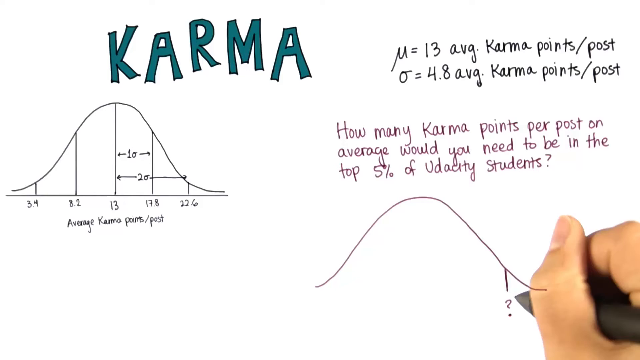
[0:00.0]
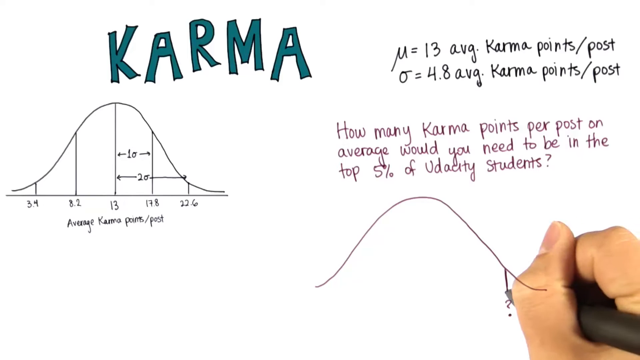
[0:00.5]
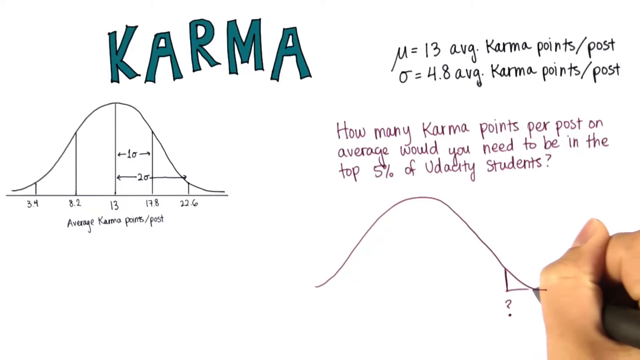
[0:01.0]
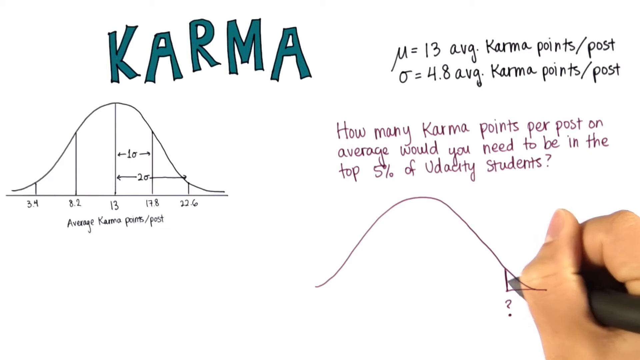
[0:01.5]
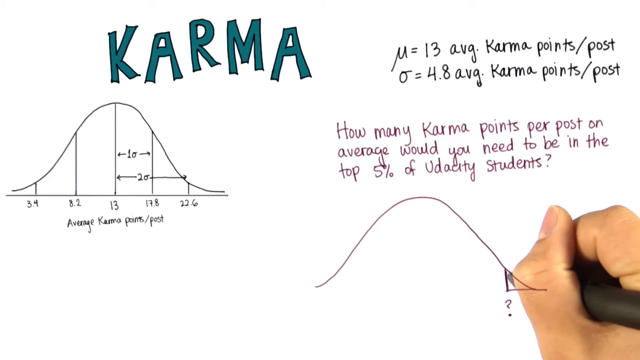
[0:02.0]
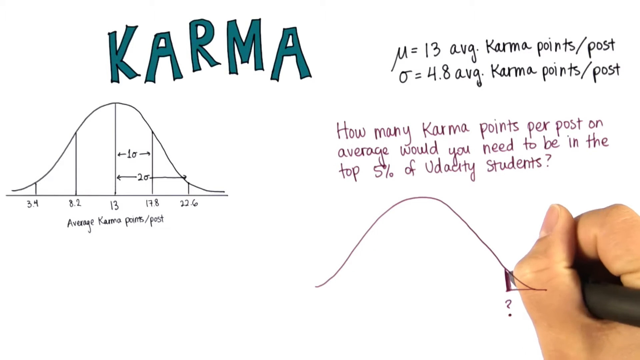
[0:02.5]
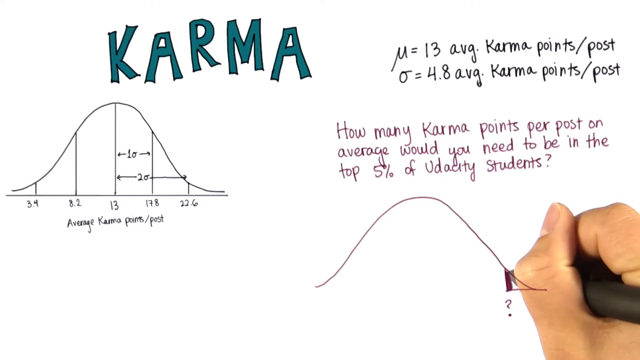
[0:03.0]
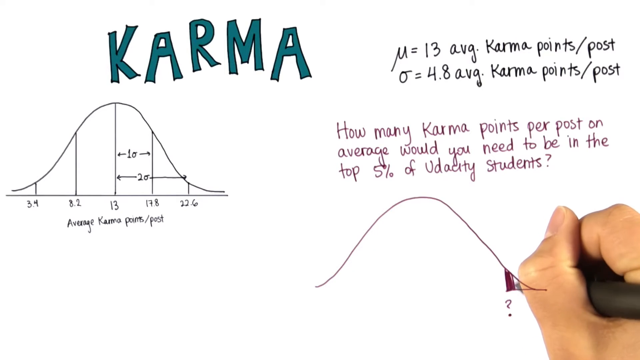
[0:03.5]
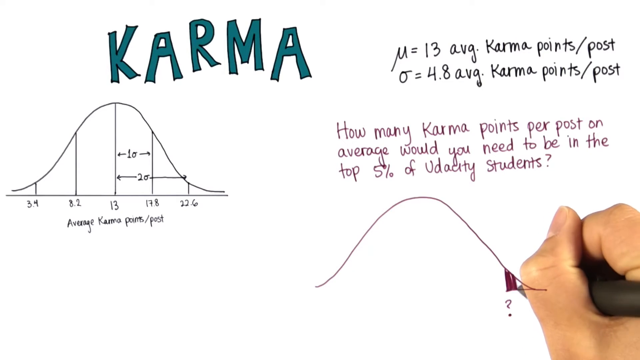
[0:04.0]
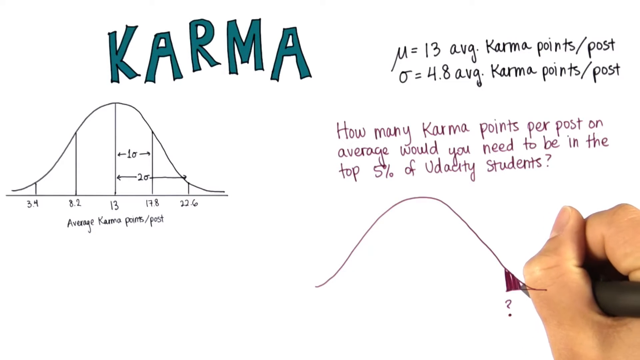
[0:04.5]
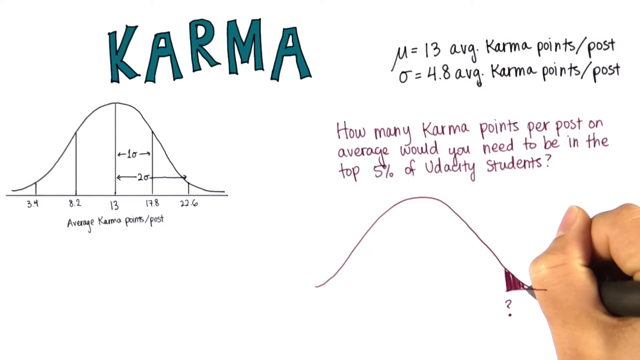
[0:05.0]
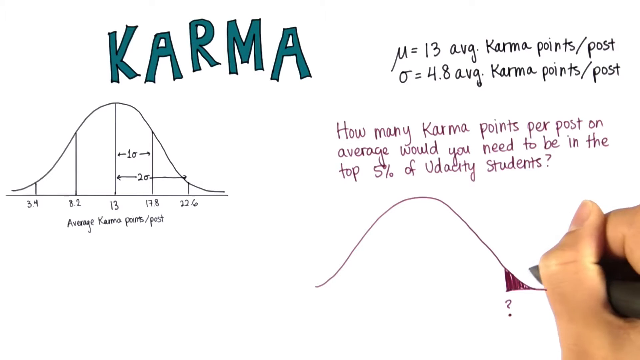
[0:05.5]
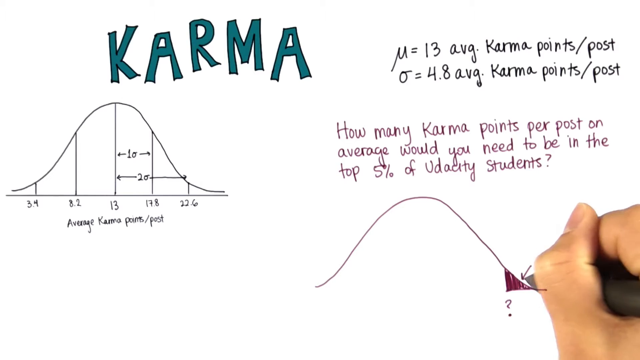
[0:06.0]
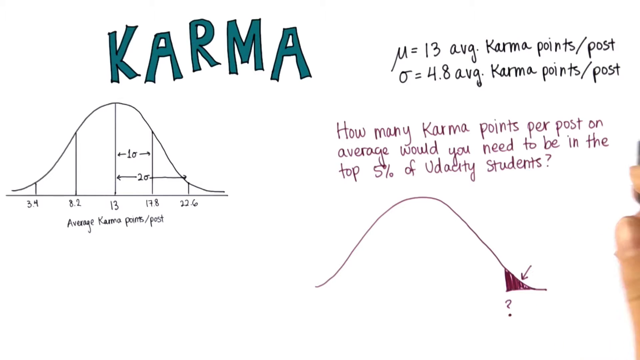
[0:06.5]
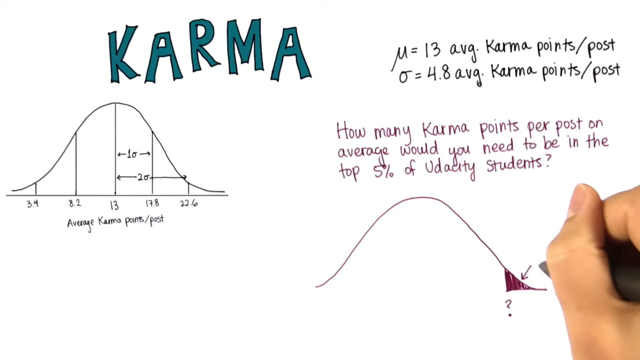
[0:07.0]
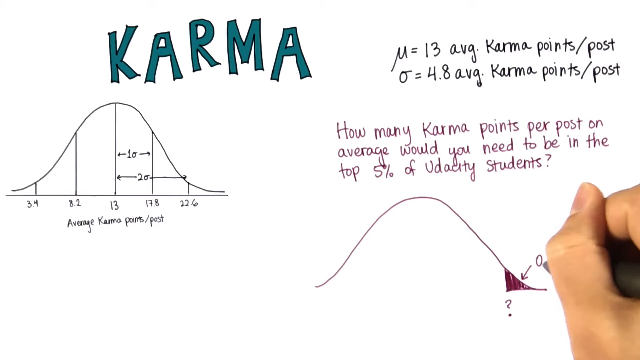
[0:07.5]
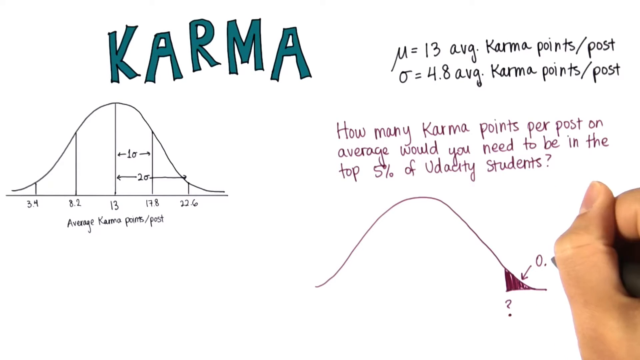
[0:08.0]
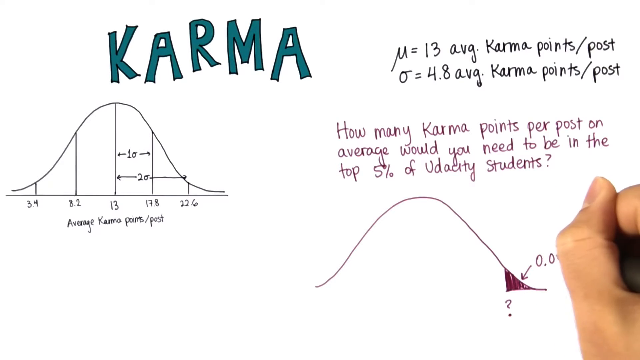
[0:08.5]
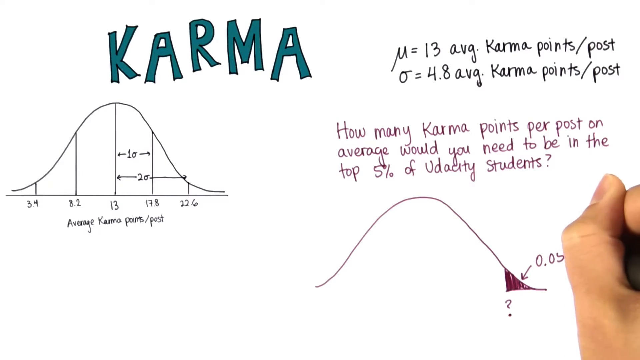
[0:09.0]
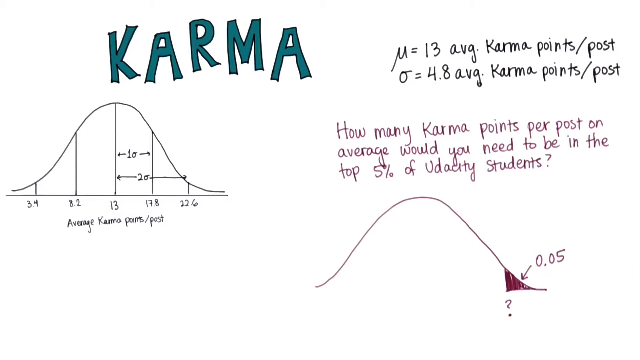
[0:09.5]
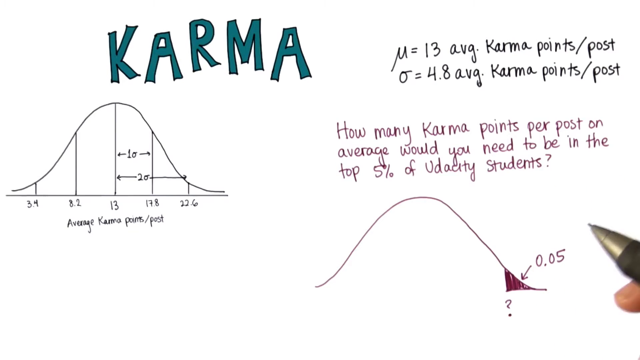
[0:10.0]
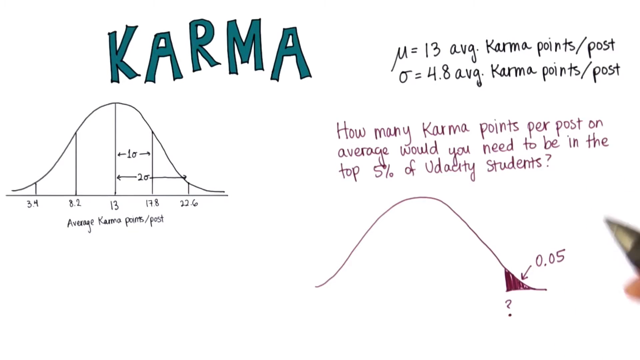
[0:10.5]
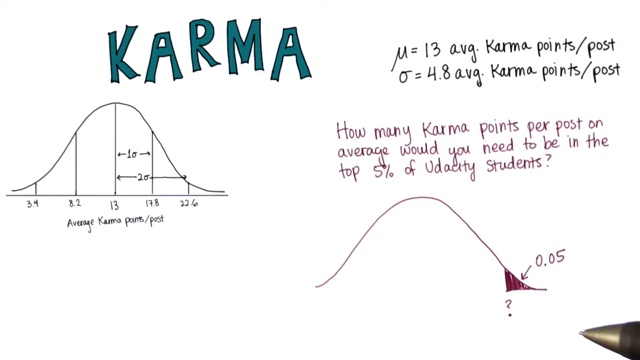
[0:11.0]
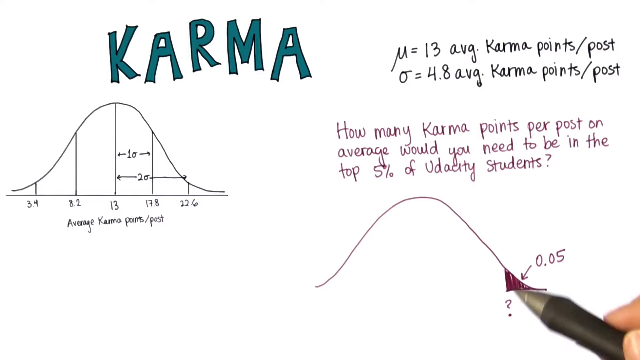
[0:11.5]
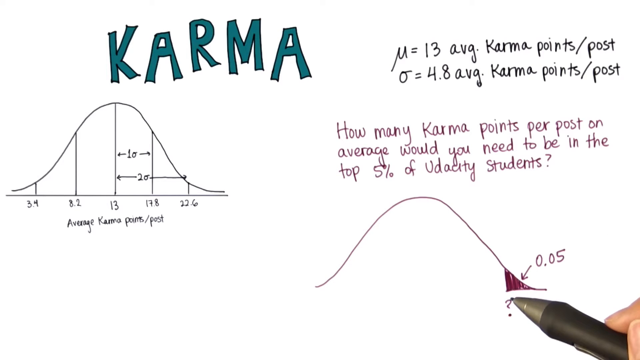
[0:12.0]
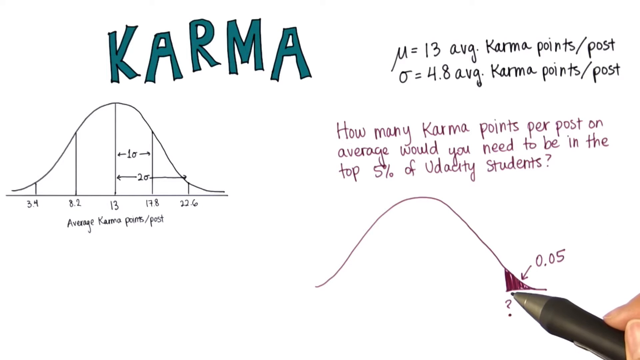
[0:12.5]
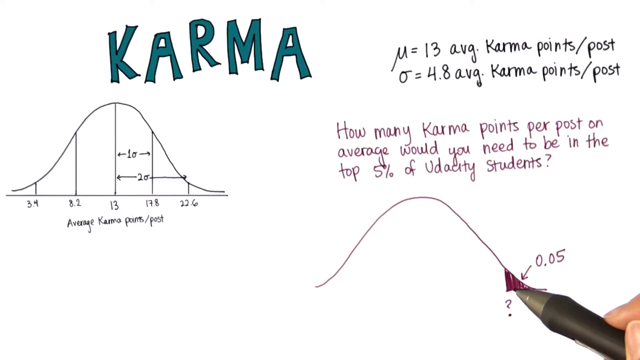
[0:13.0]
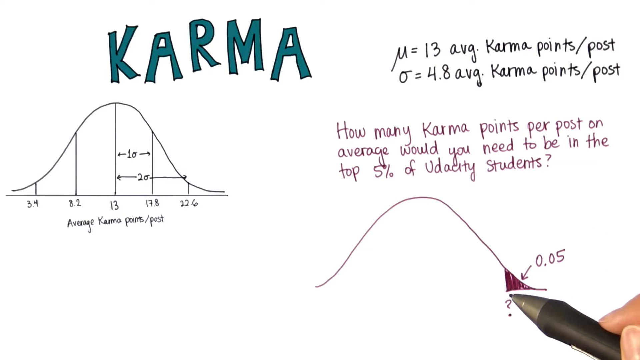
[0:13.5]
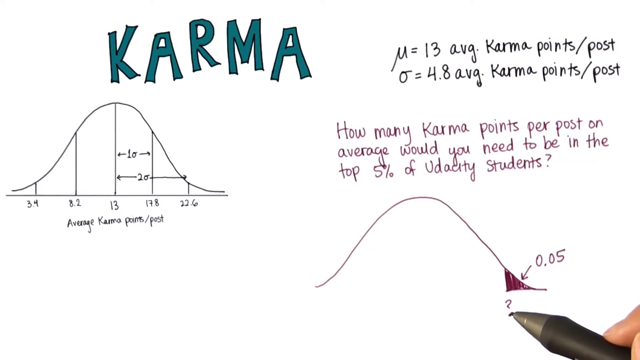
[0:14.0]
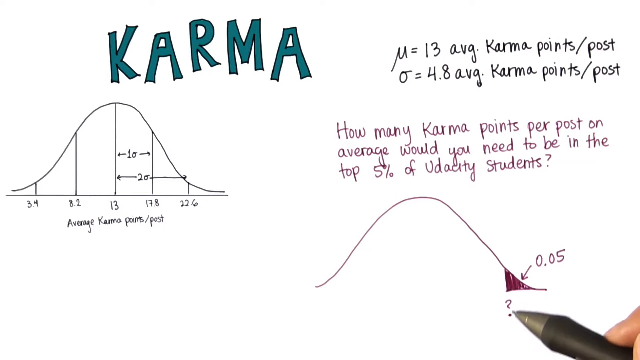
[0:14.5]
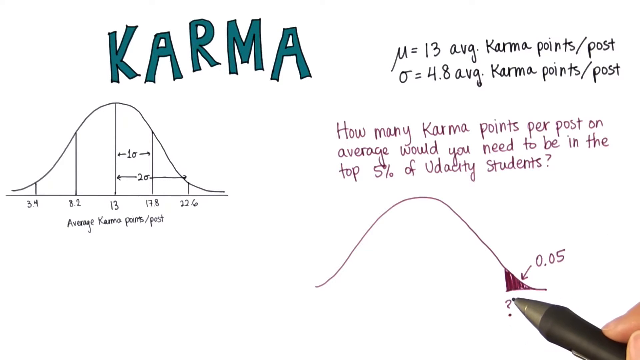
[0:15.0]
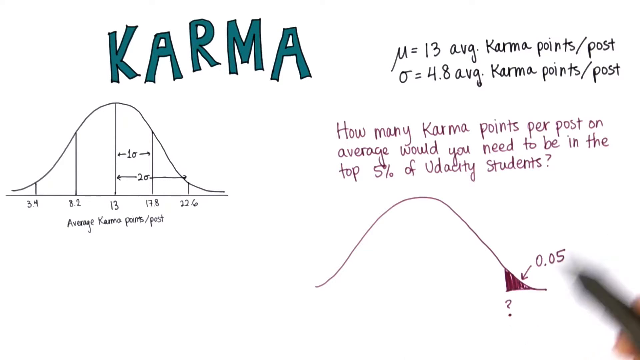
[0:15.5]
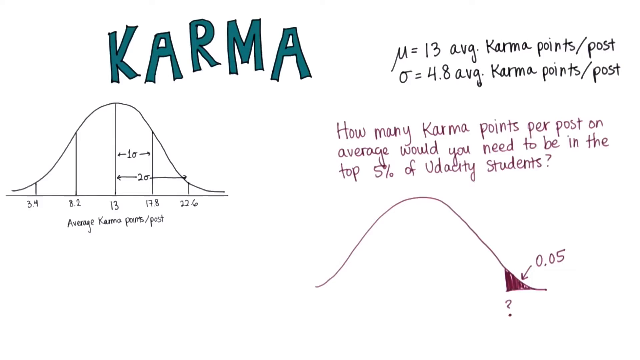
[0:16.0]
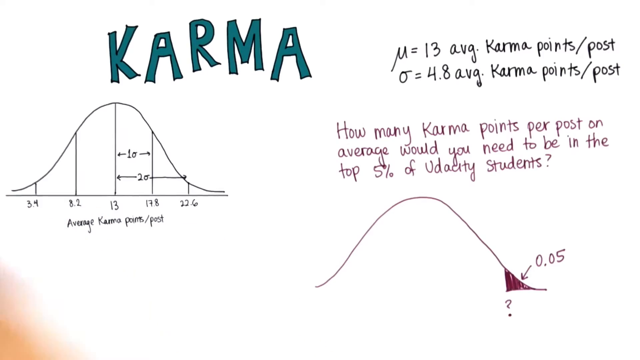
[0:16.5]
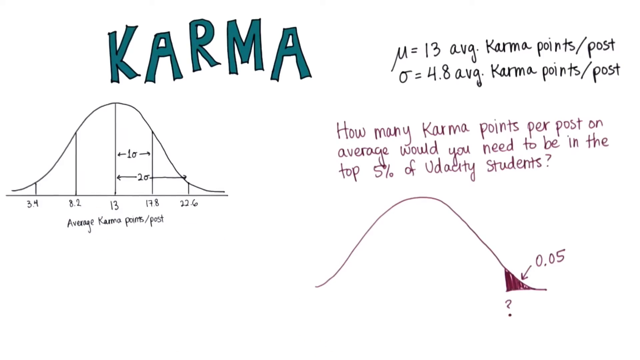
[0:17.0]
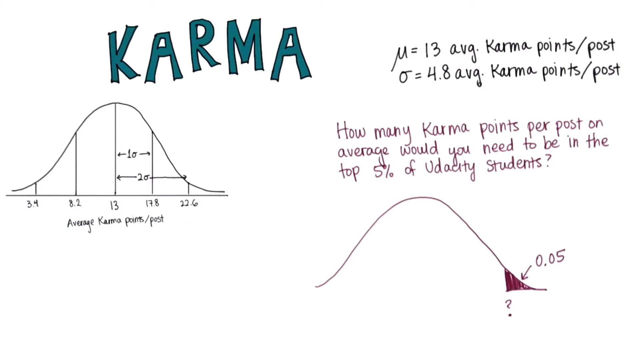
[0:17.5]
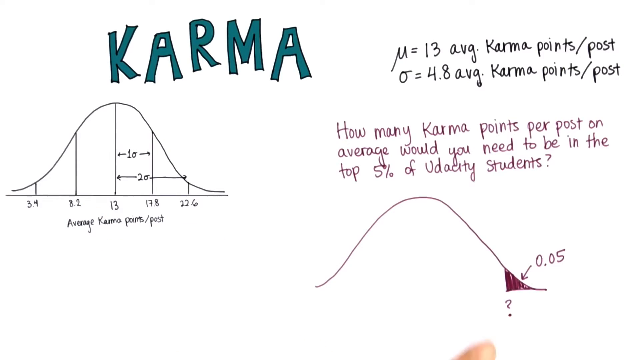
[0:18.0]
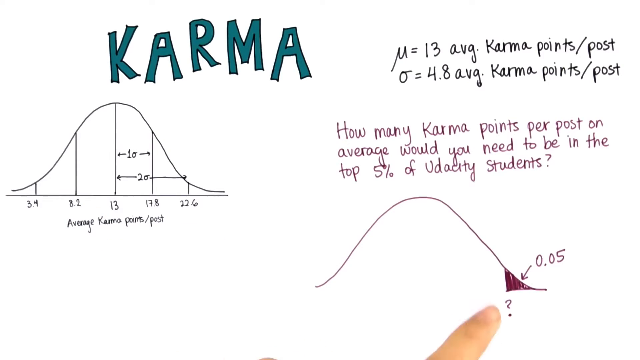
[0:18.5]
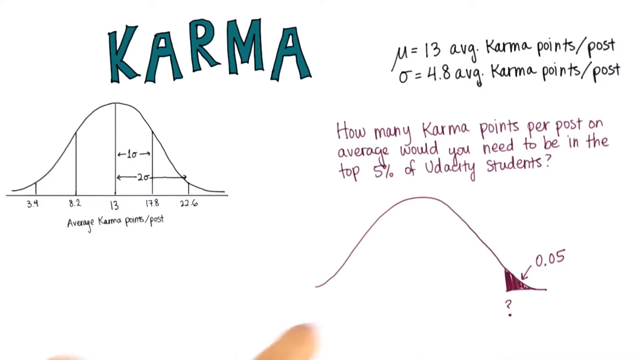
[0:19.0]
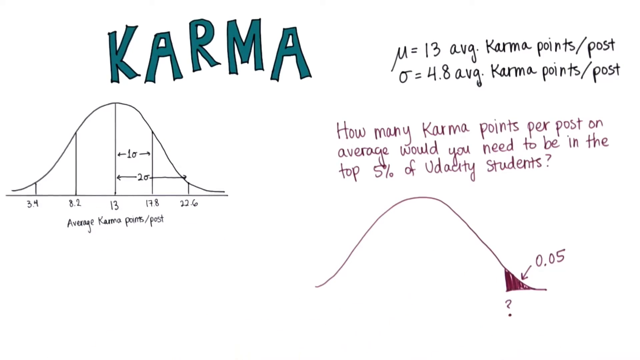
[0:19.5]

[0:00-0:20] An assignment is on screen with a graph, and the word "karma" is written in a green-like font. On the right are equations: "U equals 13 average karma points per post" and "O equals 4.8 average karma points per post," along with the question "How many karma points per post on average would you need to be in the top five of Udacity students?" A graph of students' average karma points shows the majority at 13, almost 80% in the range from 8.2 to 17.8, the top students above 22 points, and the smallest below 3.4. A man creates another graph in a mixture of red and pink colors. His hands are visible, and he is holding a pen.